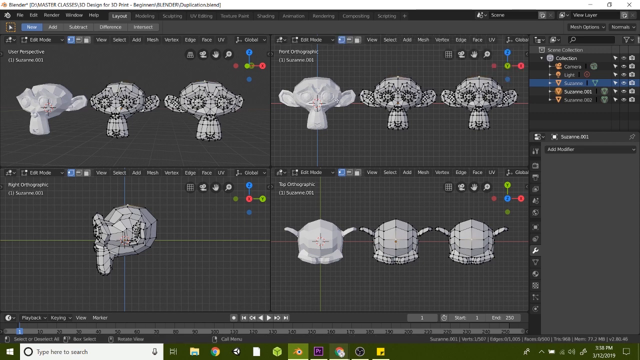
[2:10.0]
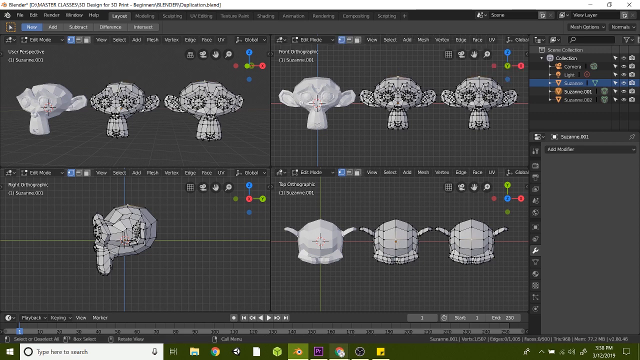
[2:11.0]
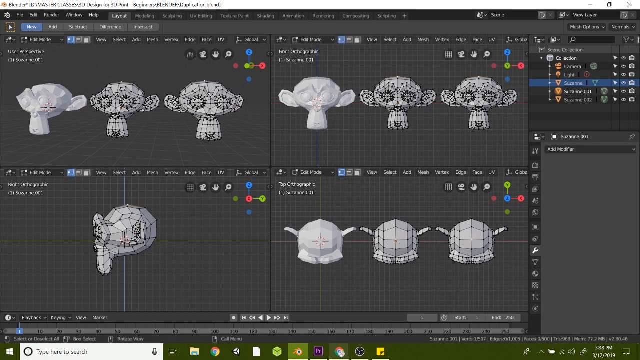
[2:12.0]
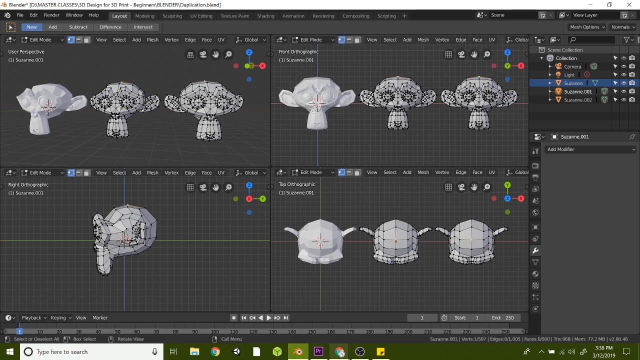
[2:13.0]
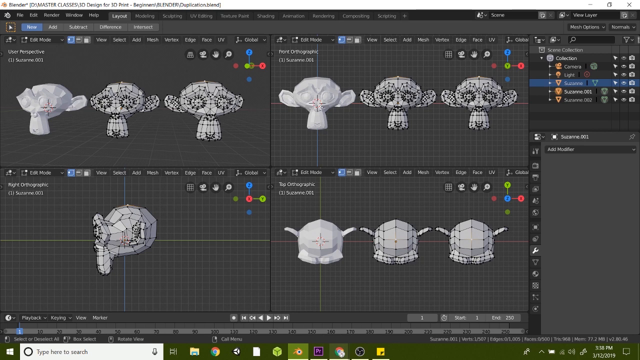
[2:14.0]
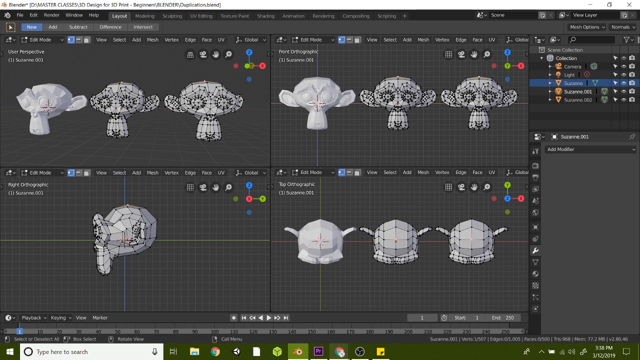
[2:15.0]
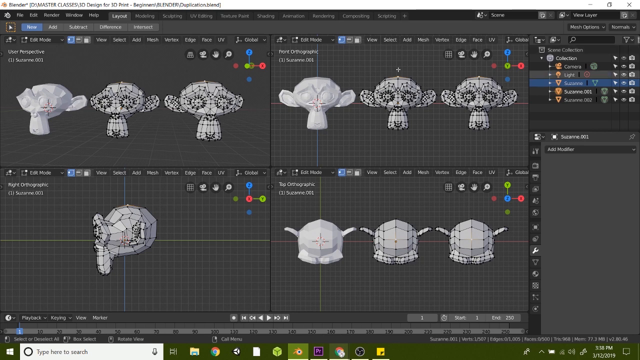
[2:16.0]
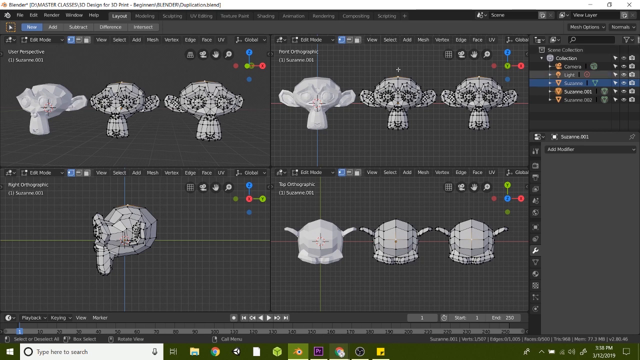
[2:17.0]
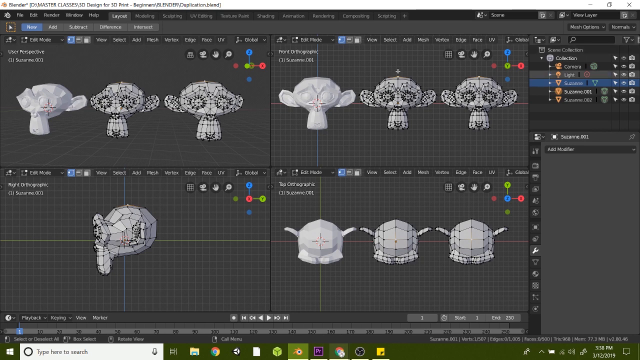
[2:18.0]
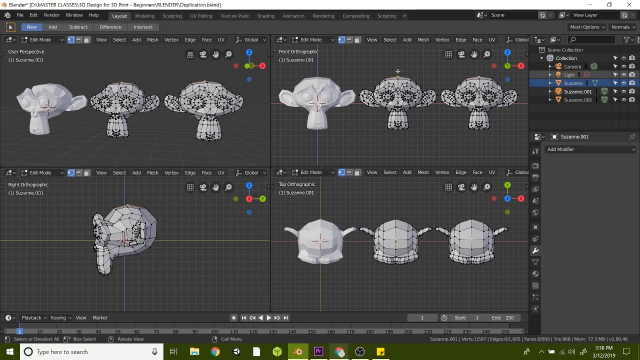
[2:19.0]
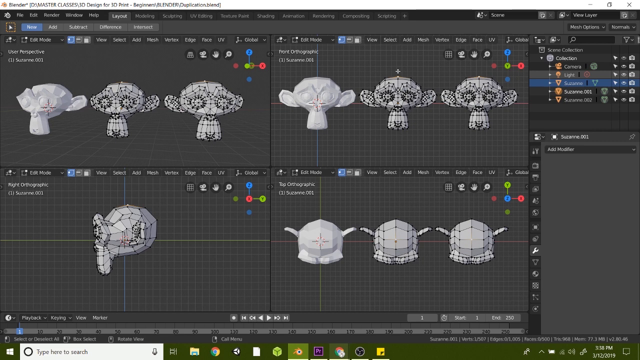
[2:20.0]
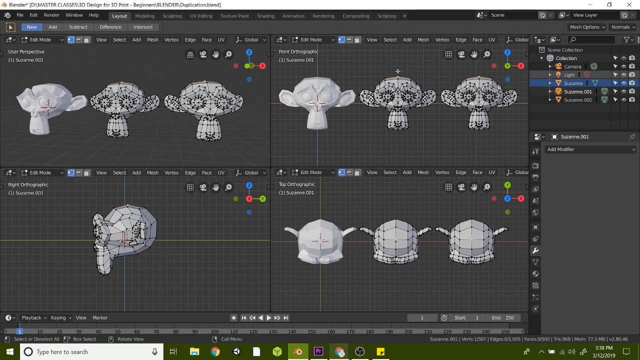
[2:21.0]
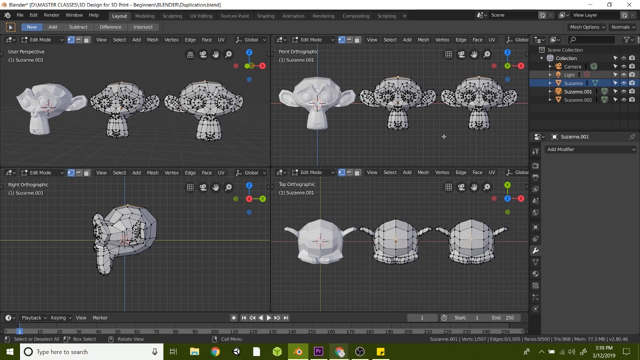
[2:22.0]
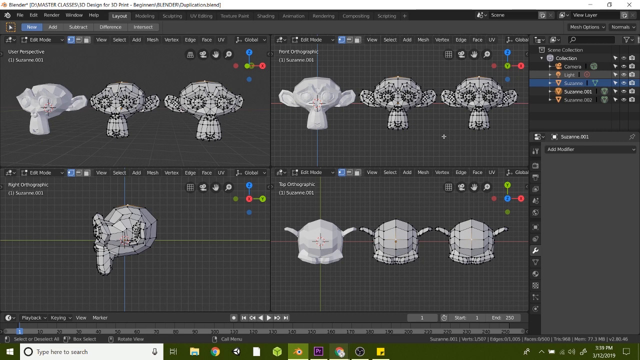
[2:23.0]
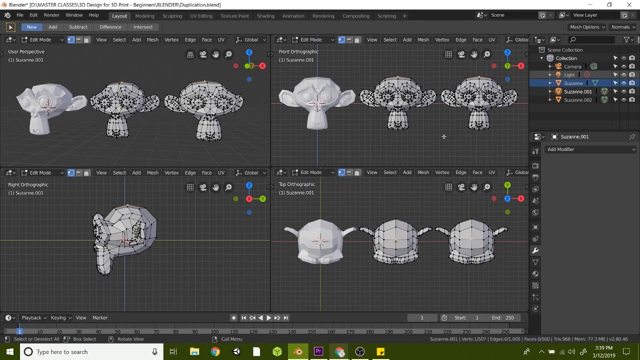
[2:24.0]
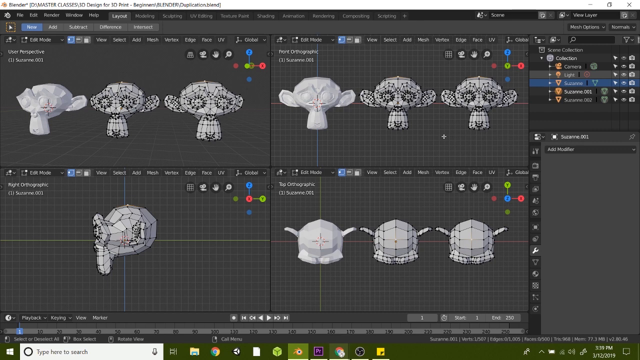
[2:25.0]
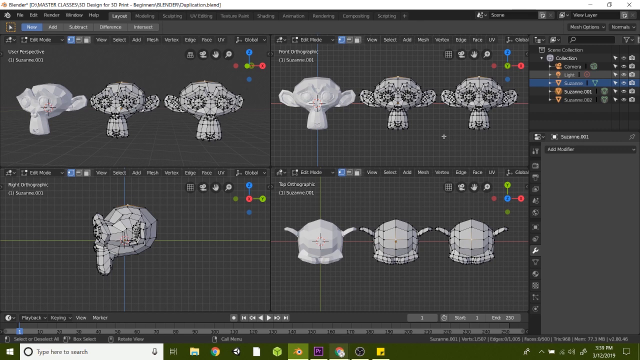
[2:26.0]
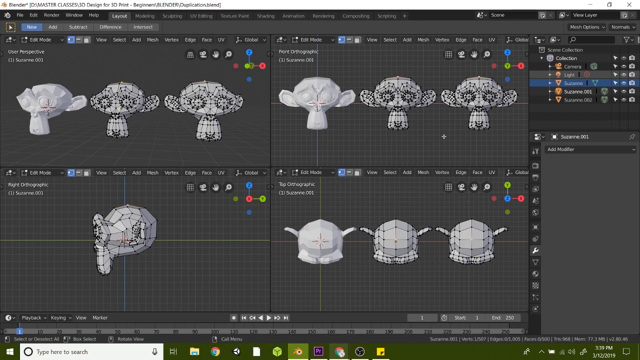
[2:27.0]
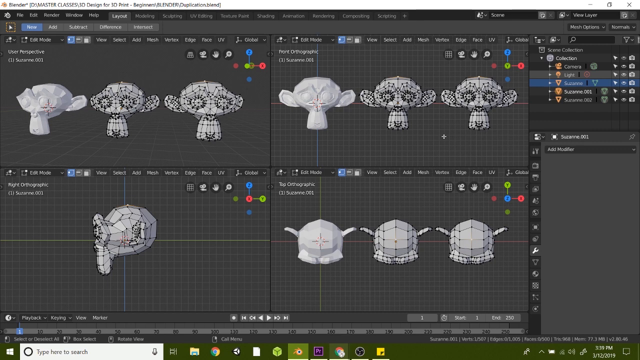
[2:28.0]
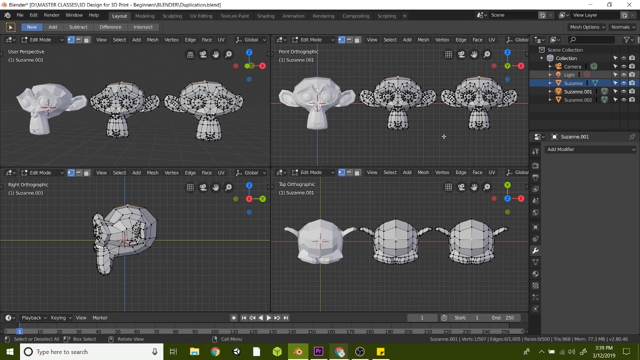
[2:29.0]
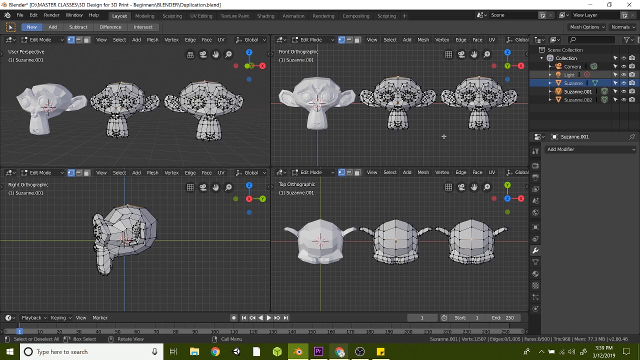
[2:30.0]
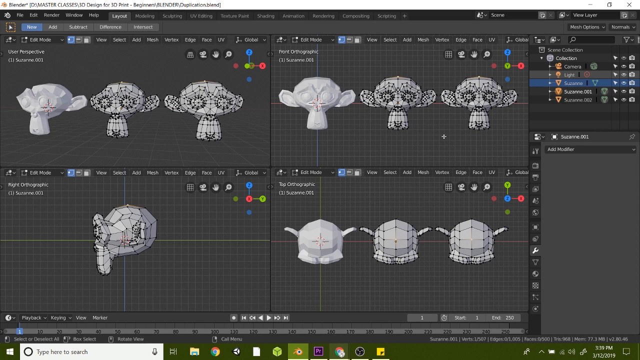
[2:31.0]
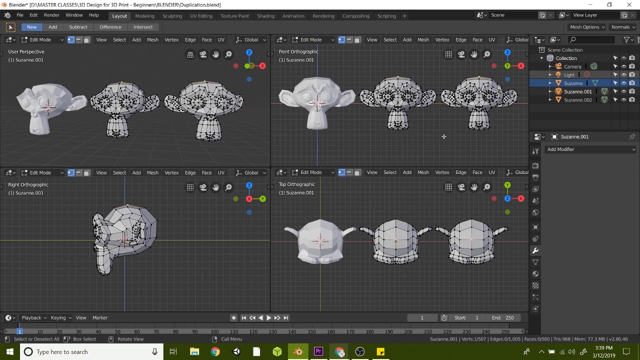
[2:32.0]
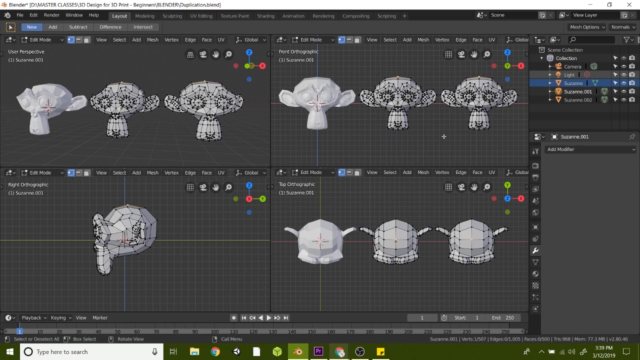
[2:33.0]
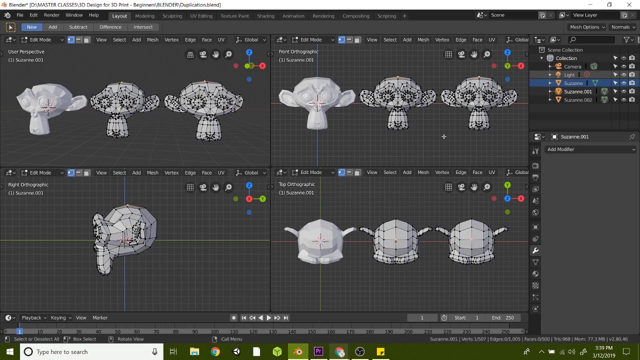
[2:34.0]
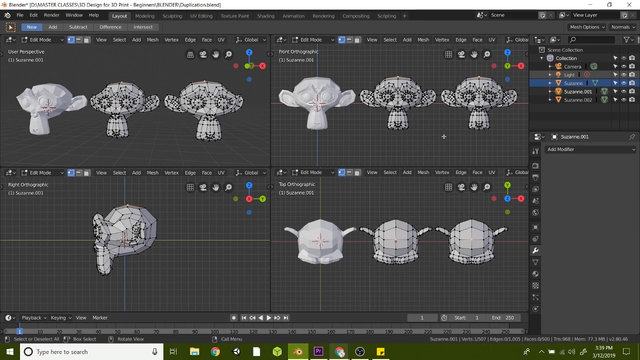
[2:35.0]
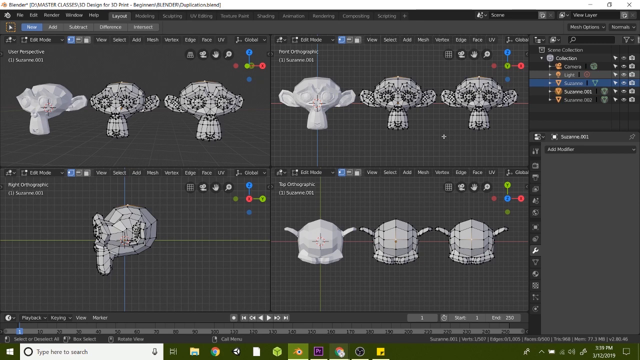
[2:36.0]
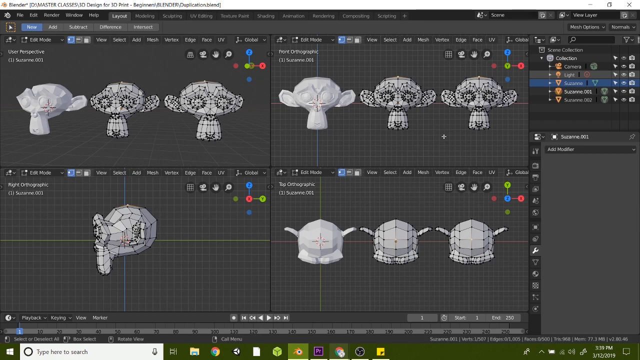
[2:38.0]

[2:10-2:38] The man moves on from copying to something else that is unclear, continuing the hands-on tutorial in Blender.